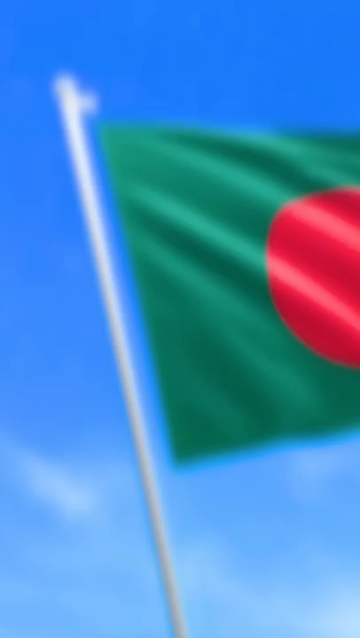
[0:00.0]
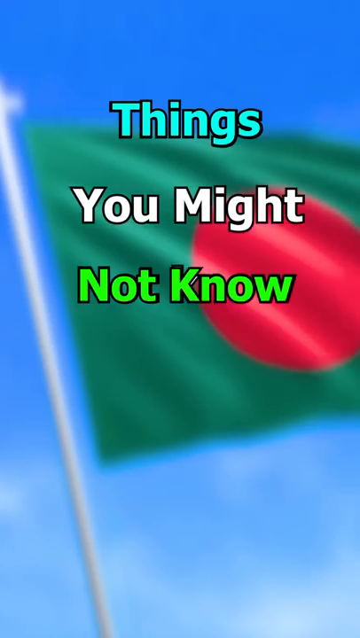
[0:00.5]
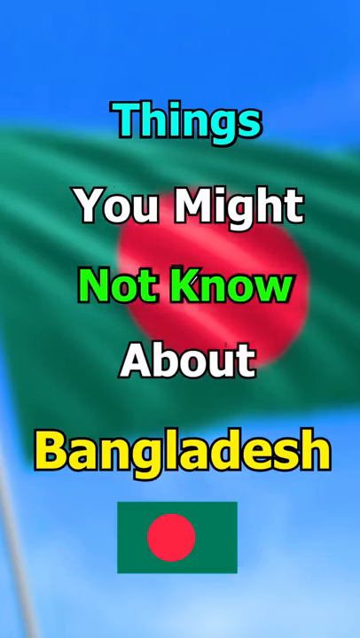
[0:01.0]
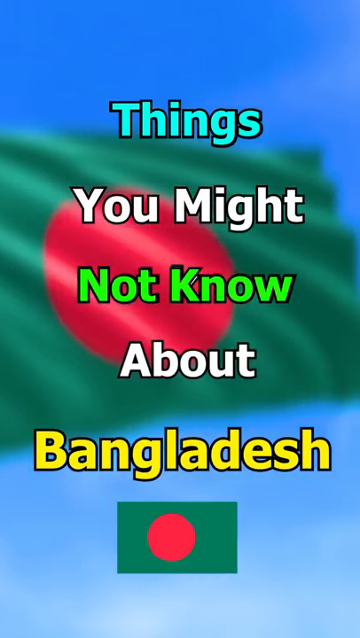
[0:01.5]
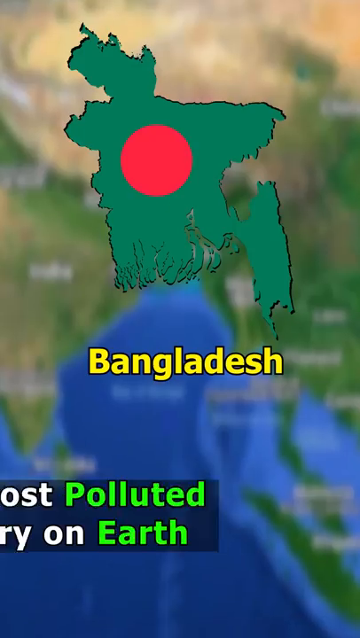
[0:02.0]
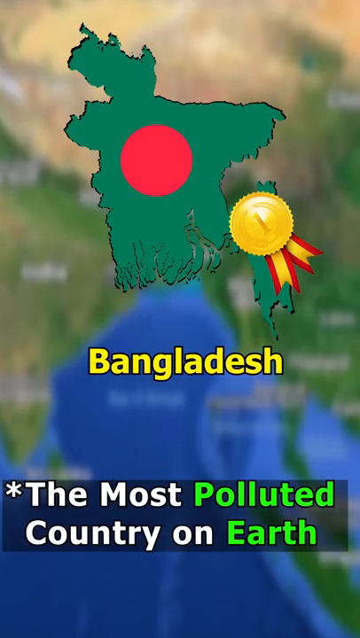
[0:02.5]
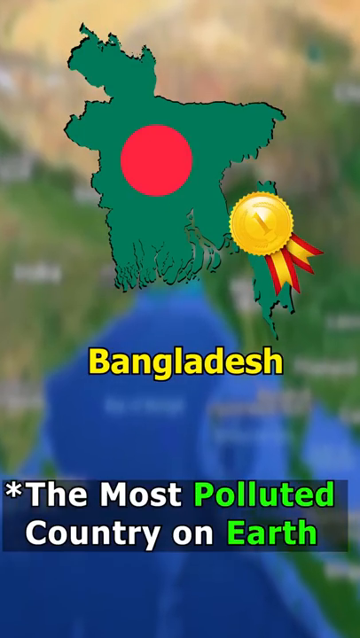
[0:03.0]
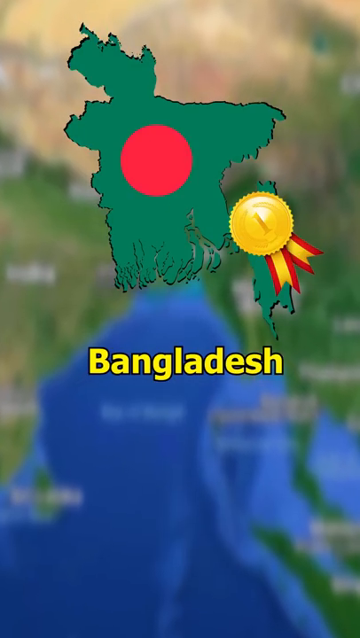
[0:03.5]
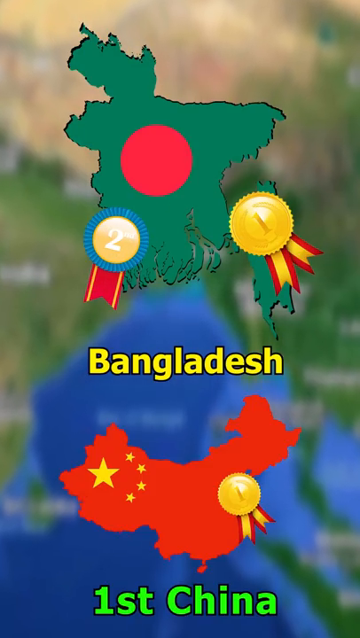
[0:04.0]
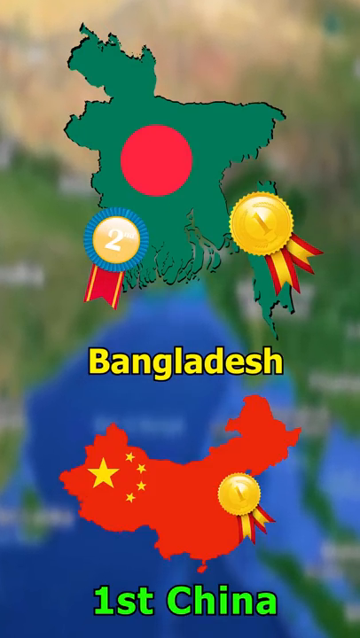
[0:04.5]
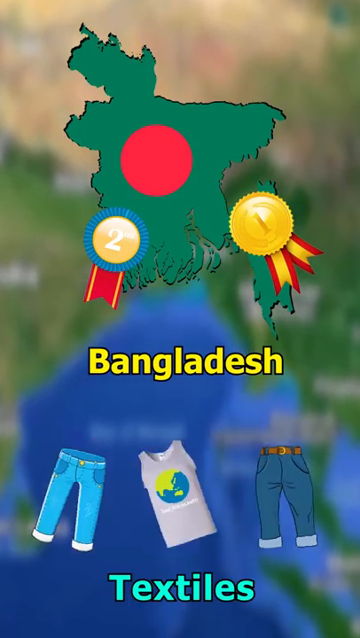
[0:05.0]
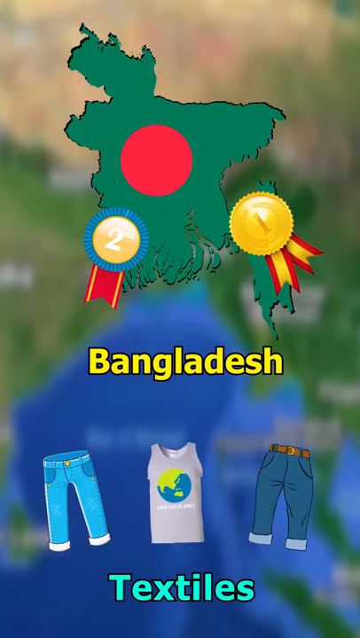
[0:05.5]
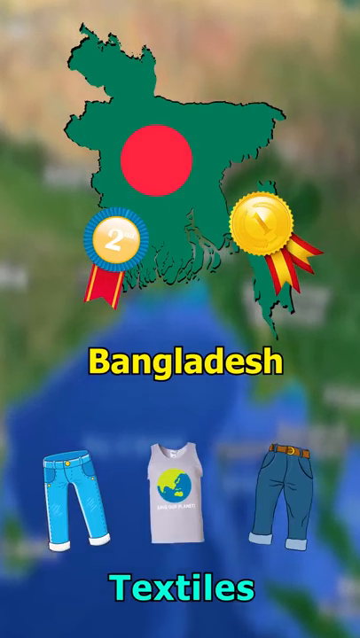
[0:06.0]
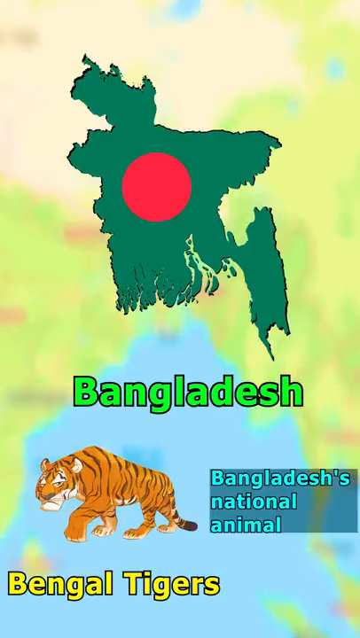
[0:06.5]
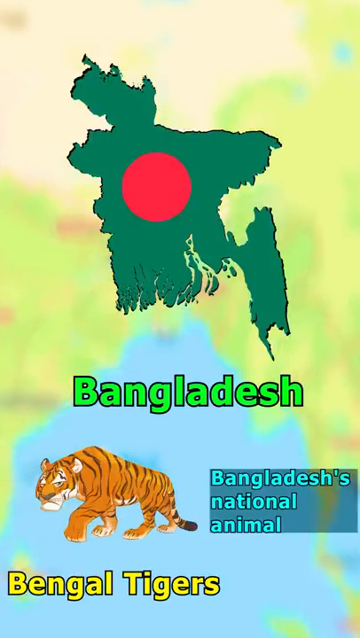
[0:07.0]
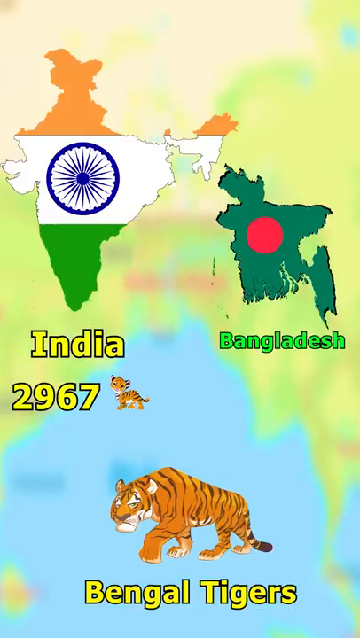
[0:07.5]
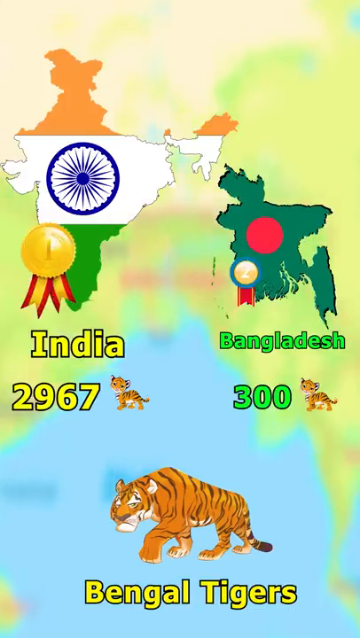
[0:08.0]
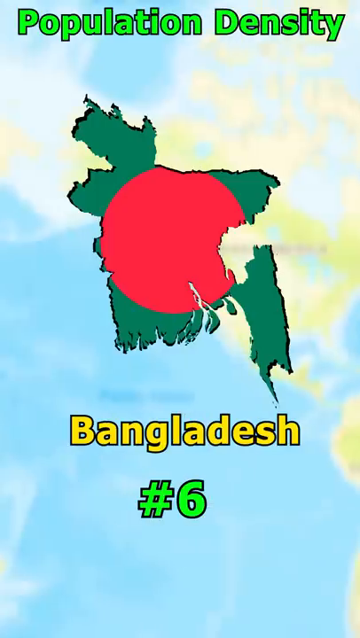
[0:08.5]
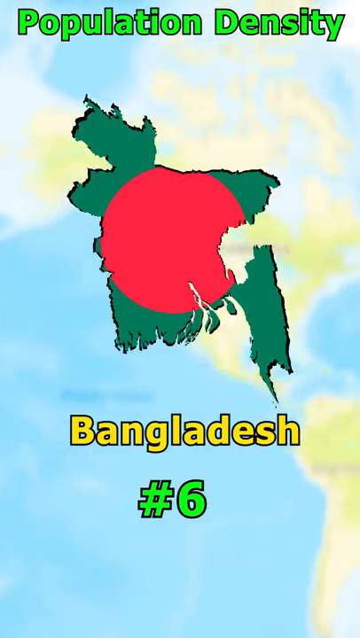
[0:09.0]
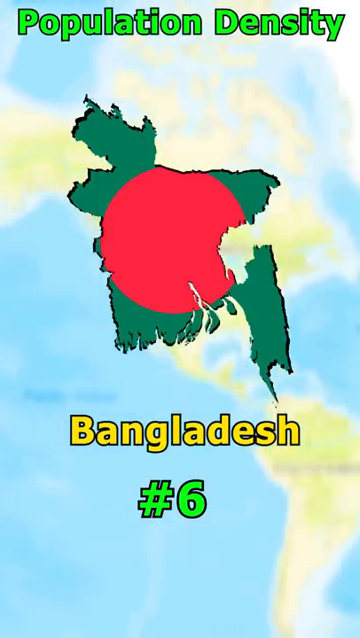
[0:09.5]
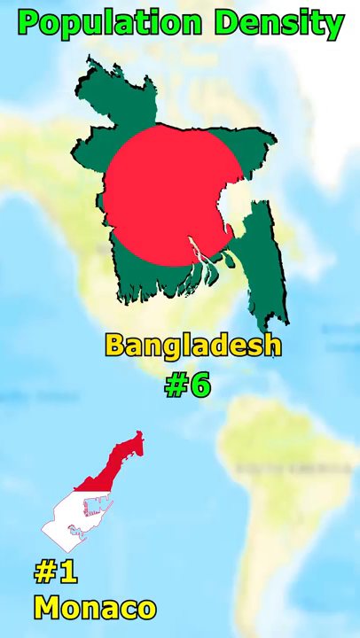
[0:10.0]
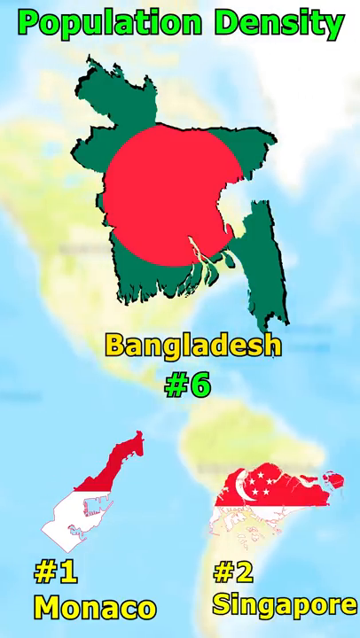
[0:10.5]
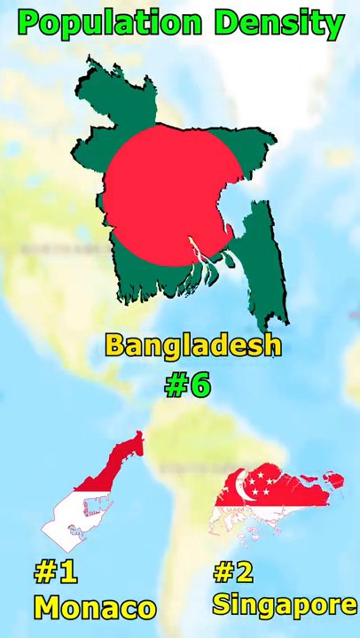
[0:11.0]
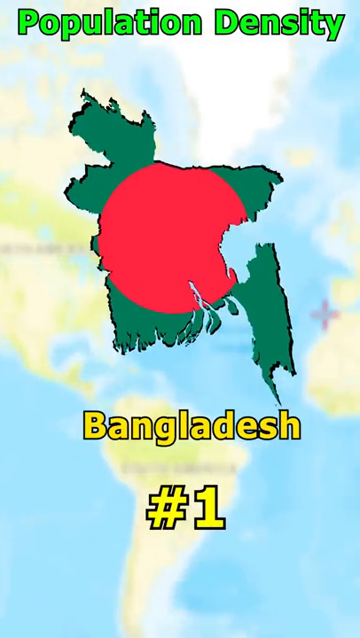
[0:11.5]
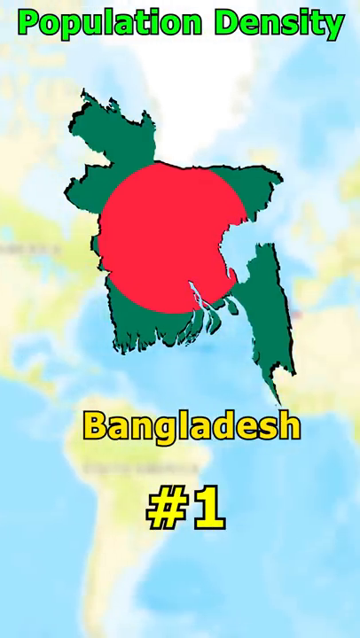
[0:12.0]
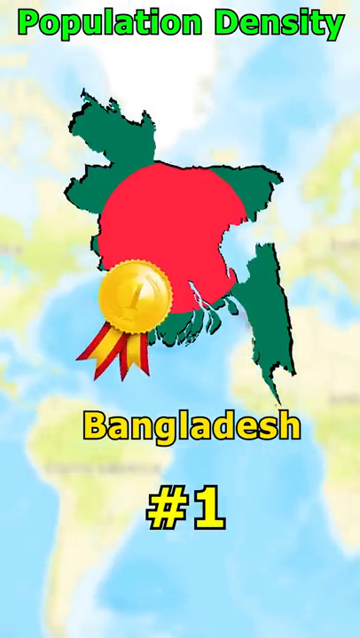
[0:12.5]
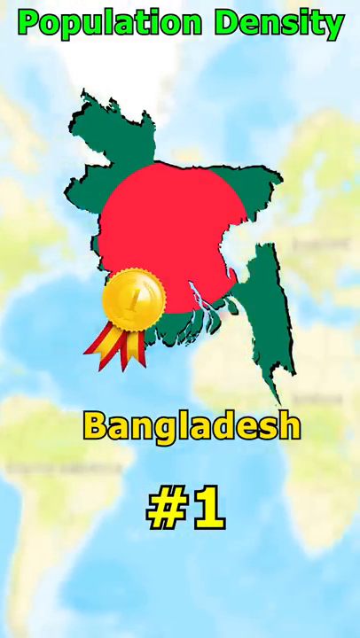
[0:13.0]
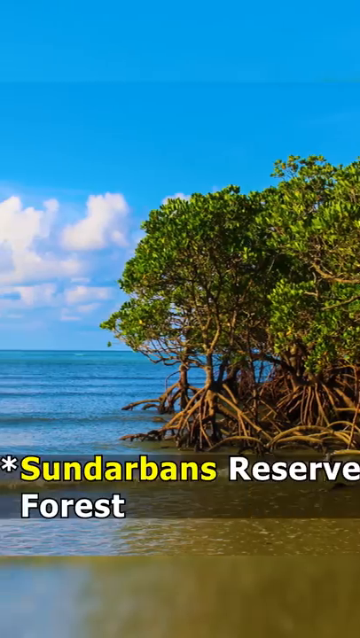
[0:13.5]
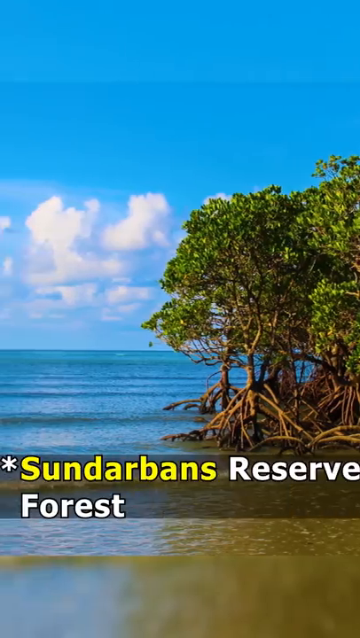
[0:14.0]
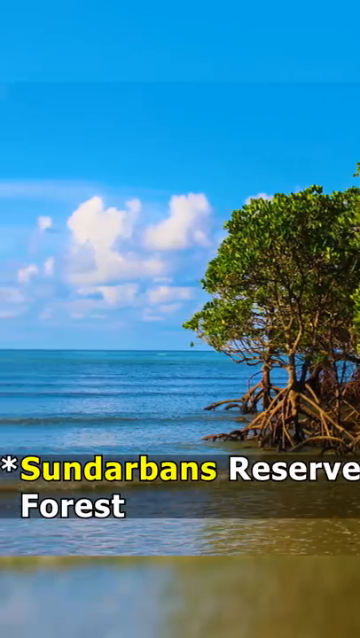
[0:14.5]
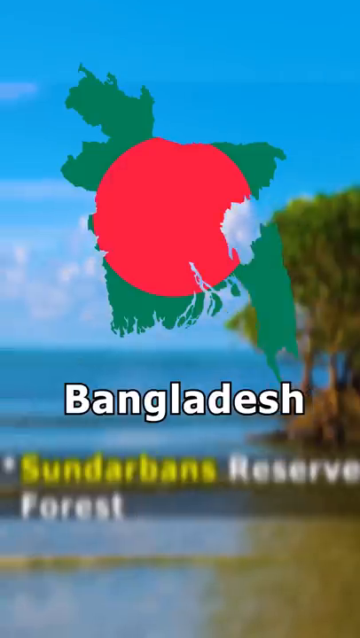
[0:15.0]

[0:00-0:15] A fast-moving cartoon about Bangladesh appears to be a tourist or propaganda video, sort of hyping up Bangladesh among the other countries in its region. Text reads "things you might not know about Bangladesh," and the facts go by very quickly, making them hard to follow. Textiles and Bengal tigers appear, along with rankings such as number six in the world and number one in something else. The video indicates that China is number one in textiles while Bangladesh is number six in the world, and that Singapore is number two. Durians and reserves are also shown, and China is listed as number one for the most polluted country in the world. For Bengal tigers, India appears to be first and Bangladesh third. The rankings show where Bangladesh competes, mainly in Eastern Asia against China, India, Singapore and other neighboring countries, and the video seems to present Bangladesh as a country to be respected for its contribution to the world's economy and what it has and does.